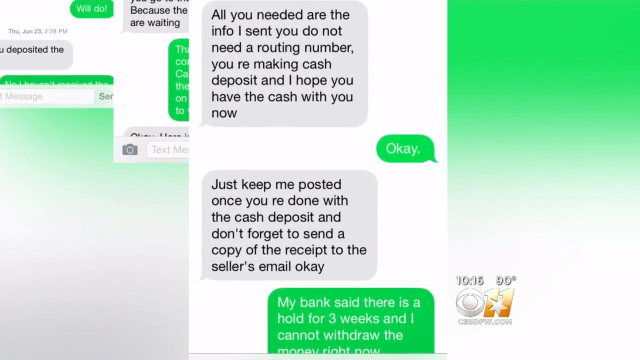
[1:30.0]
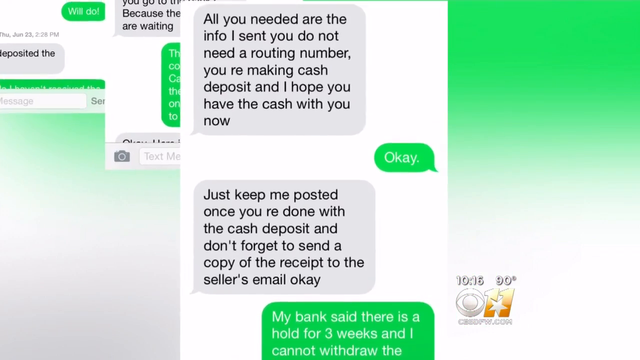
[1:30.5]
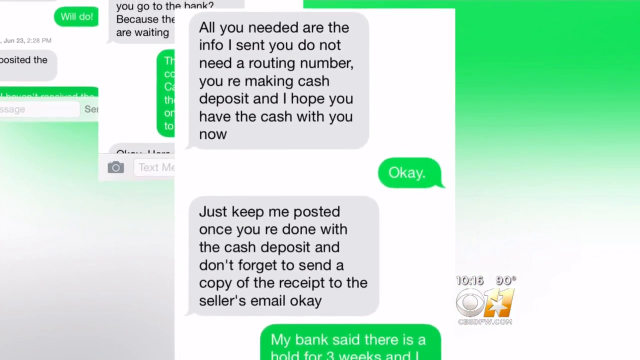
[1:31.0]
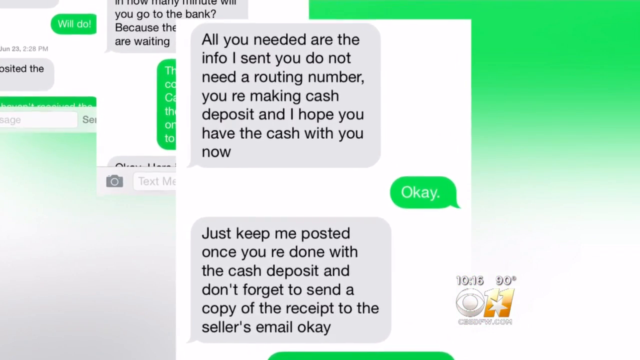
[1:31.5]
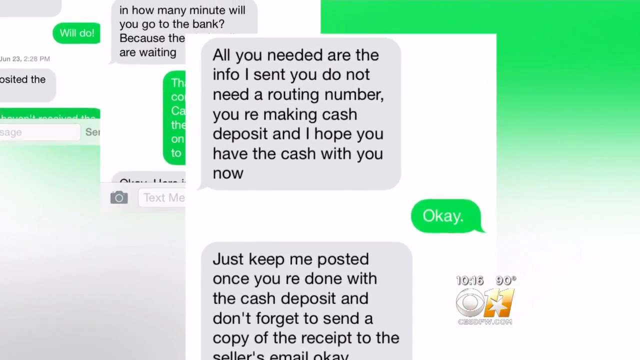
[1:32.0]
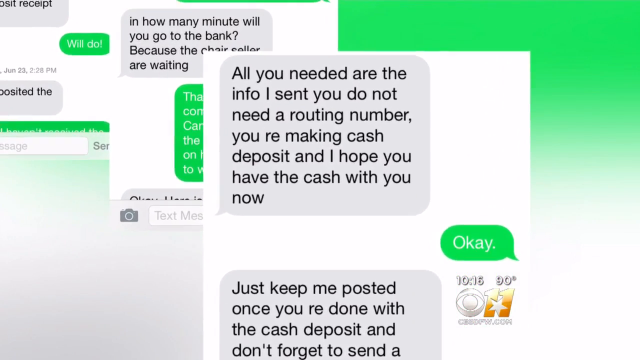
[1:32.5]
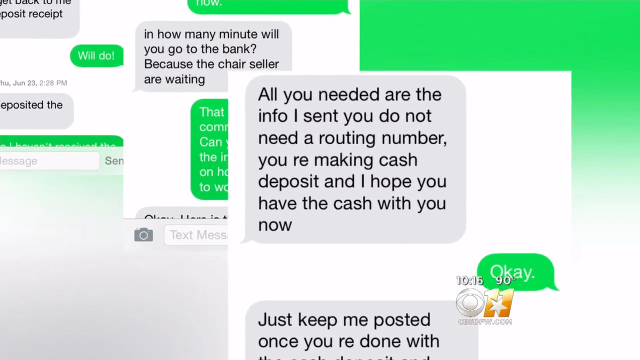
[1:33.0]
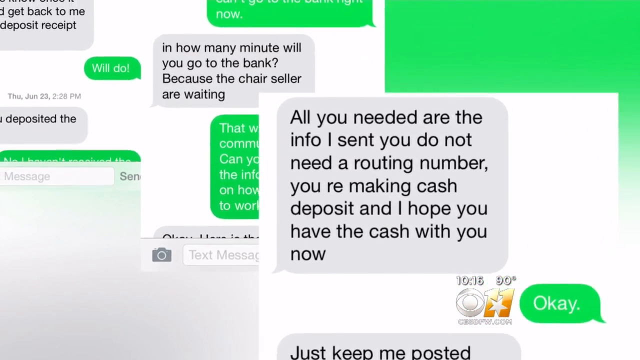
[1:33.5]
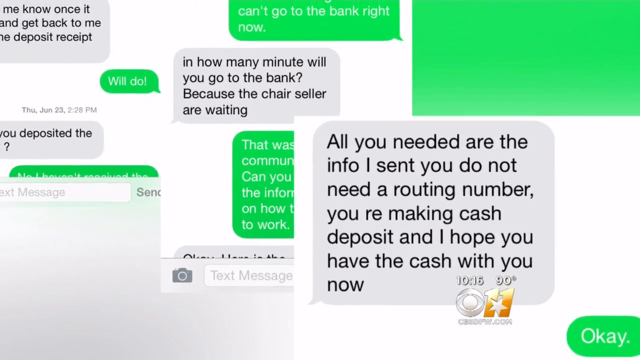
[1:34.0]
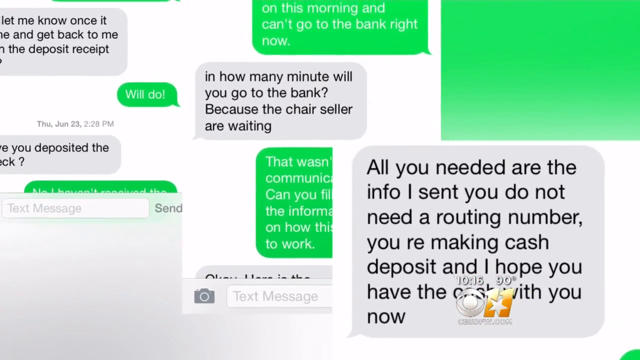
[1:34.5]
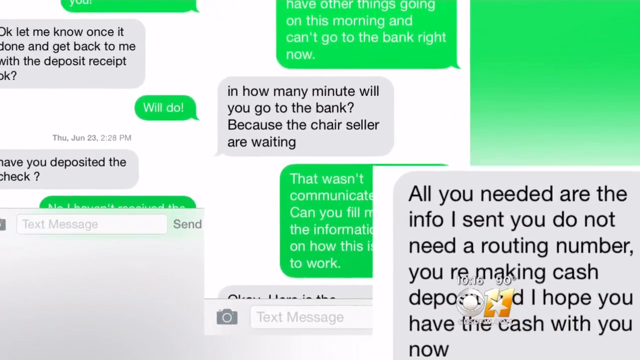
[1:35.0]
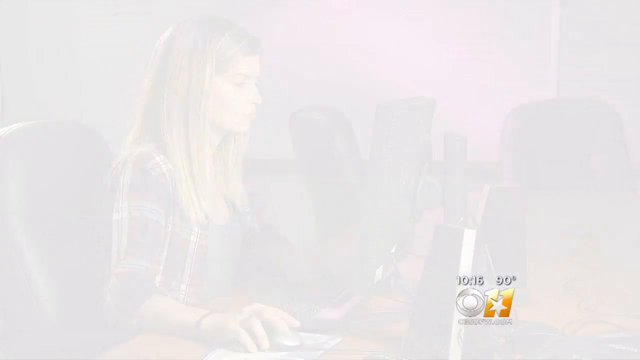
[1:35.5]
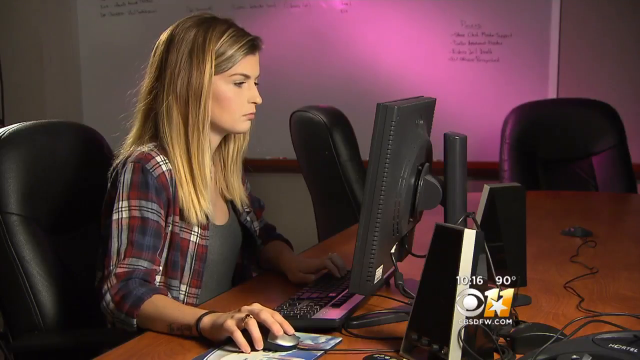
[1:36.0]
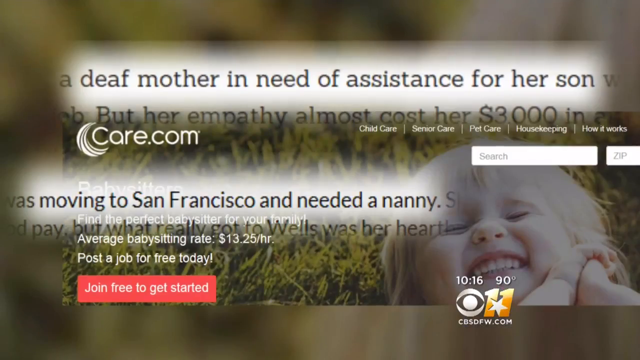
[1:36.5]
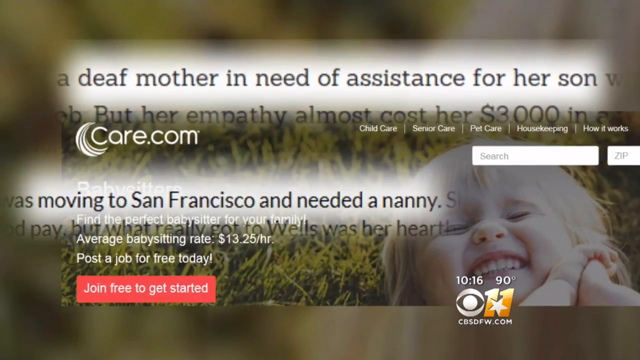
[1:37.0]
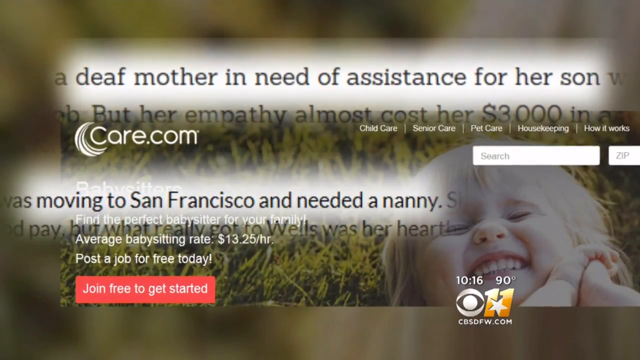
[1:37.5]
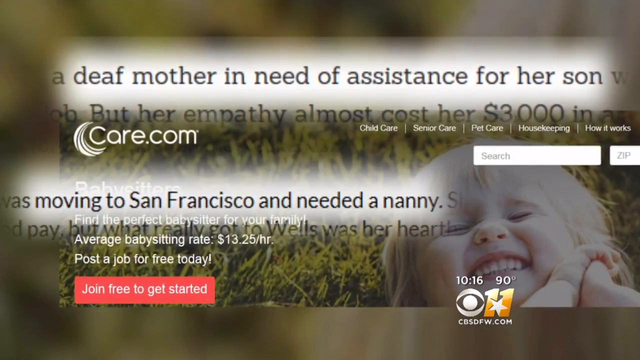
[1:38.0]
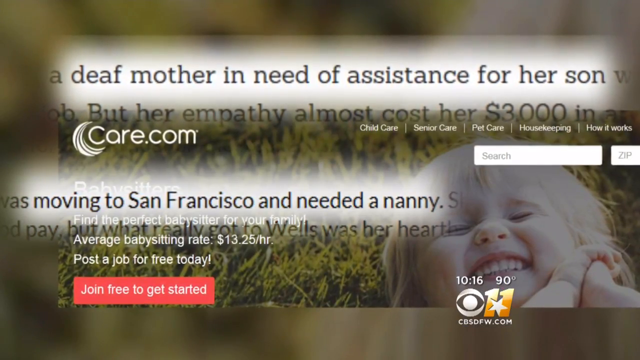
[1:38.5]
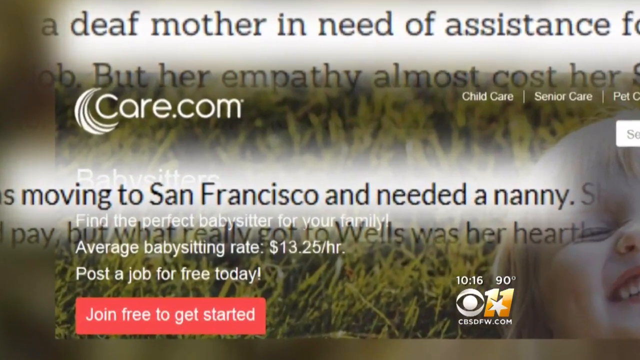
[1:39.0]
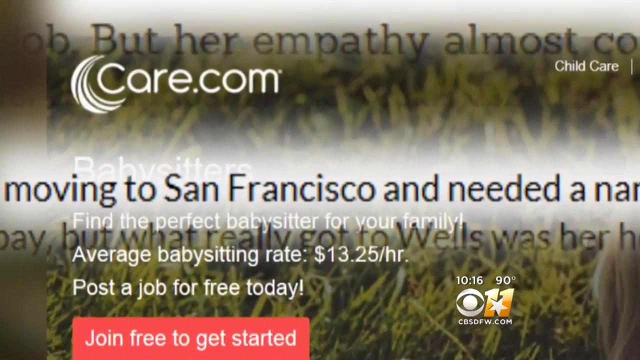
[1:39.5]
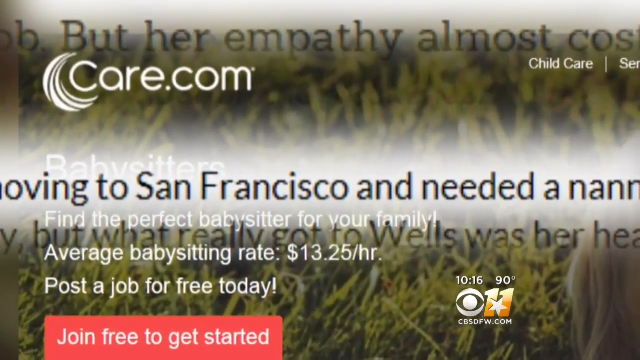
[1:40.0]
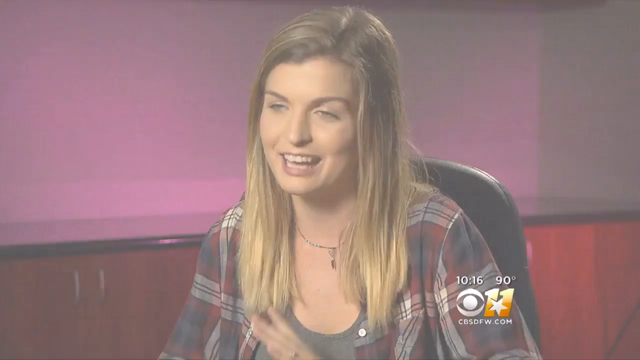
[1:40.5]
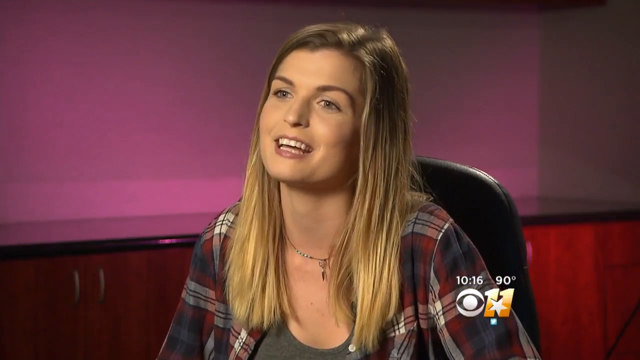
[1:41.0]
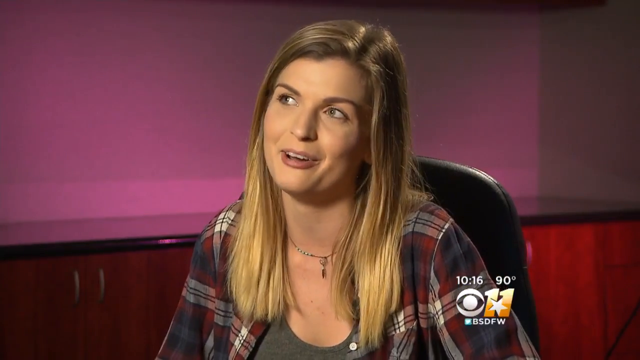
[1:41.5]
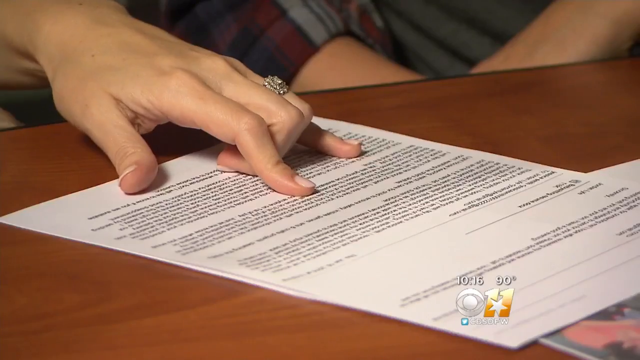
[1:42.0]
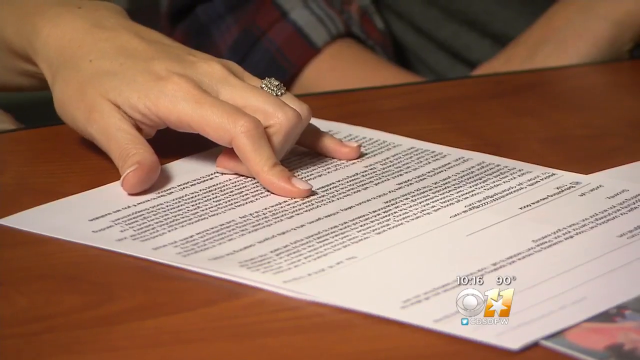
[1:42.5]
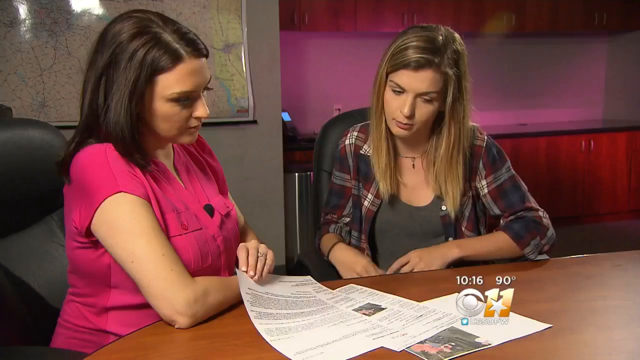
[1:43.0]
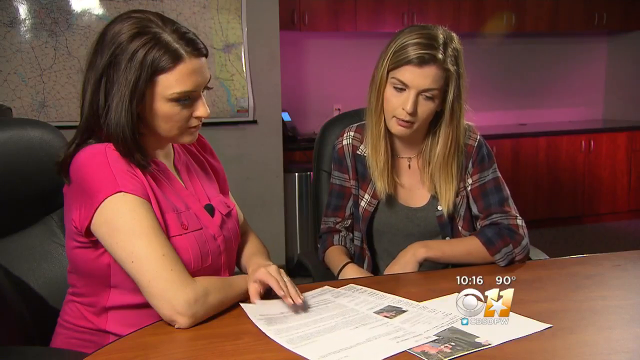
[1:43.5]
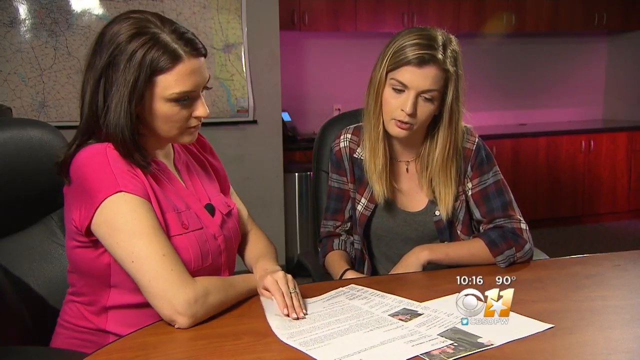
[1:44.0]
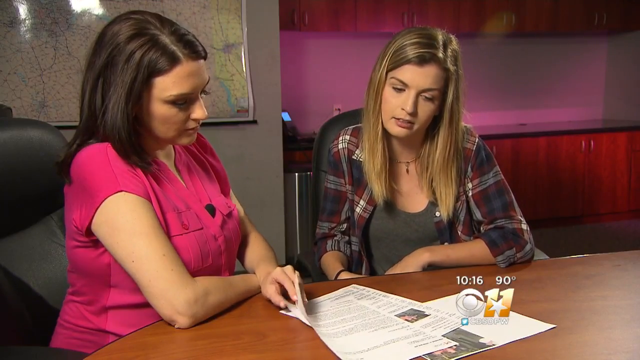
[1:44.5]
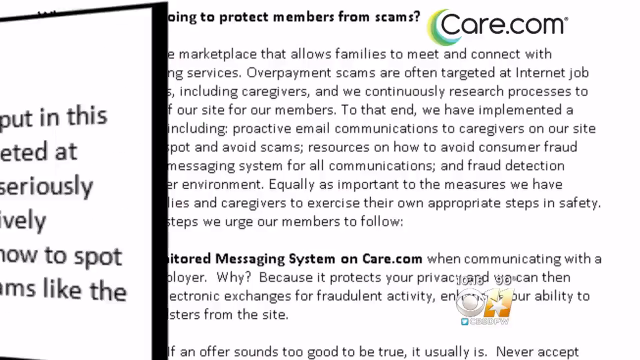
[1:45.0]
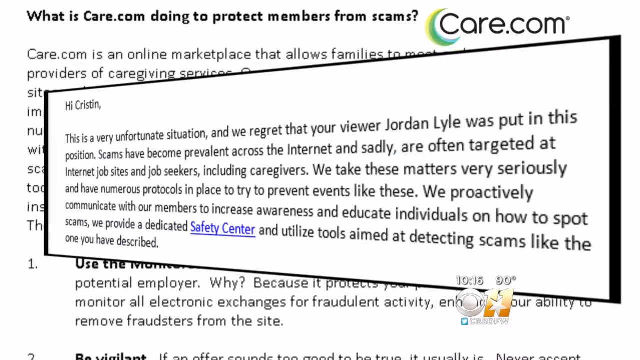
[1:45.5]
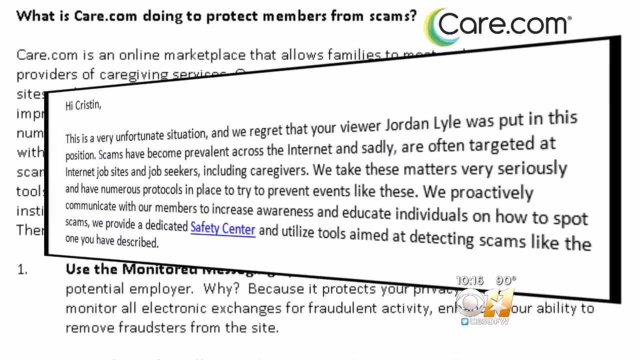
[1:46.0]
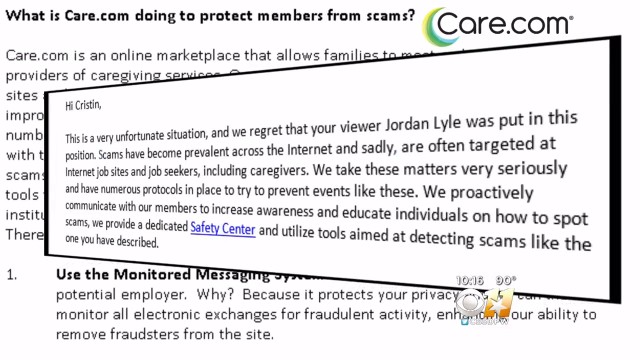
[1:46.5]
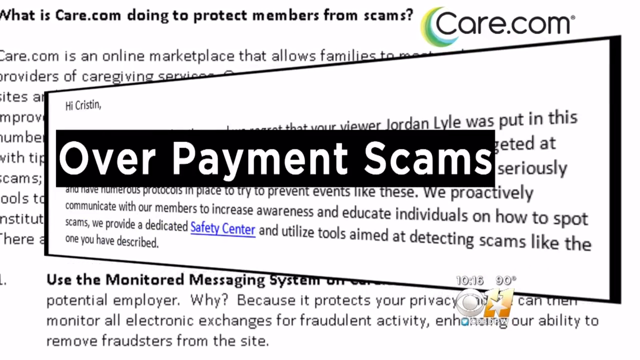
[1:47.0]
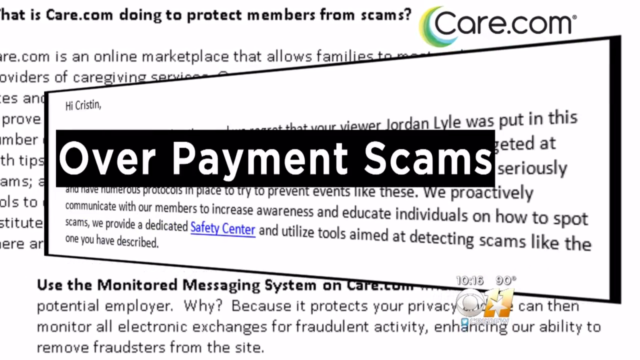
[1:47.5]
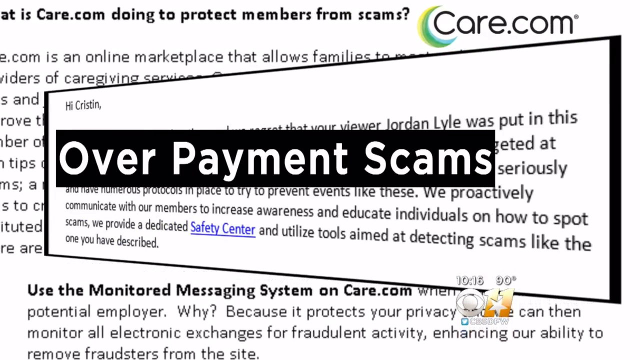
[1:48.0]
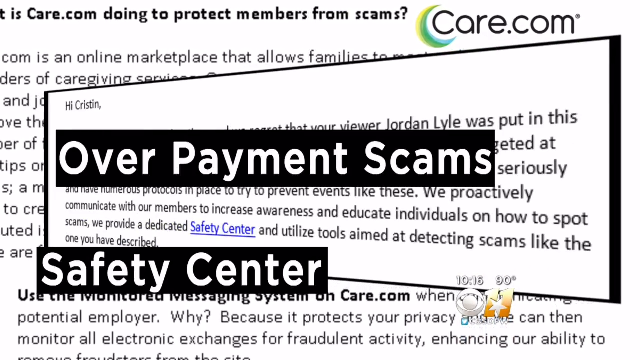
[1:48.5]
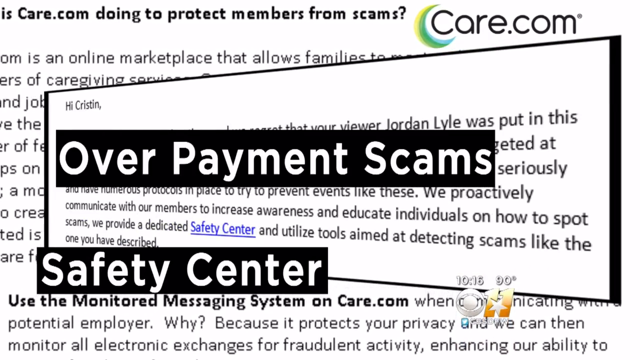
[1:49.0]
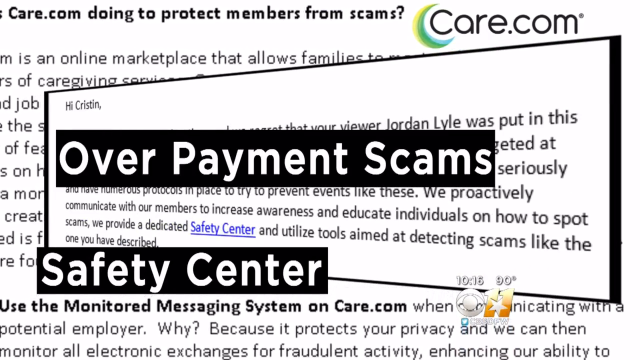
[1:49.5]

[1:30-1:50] The mobile messages between two individuals are shown in detail on screen, with one message including "you don't need a routing number, you're making cash deposit." The exchange seems to involve some kind of scam. Care.com is then shown, followed by text beginning "deaf mother in need." The video cuts back to the original female with dirty blonde hair and another female with kind of medium-length brown hair and a pink shirt, who are kind of talking to each other. Another screen then shows the text "overpayment scam," "safety center" and "care.com."